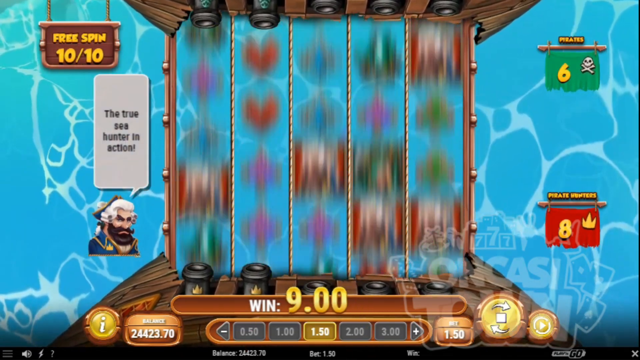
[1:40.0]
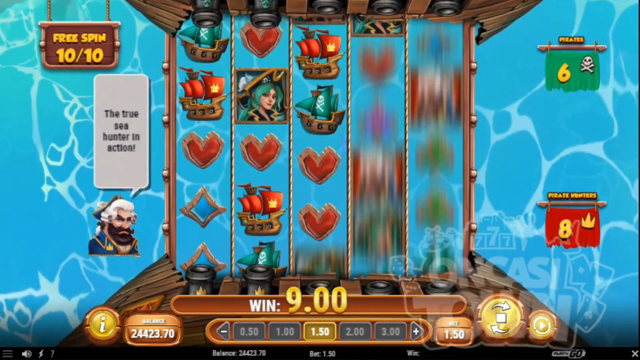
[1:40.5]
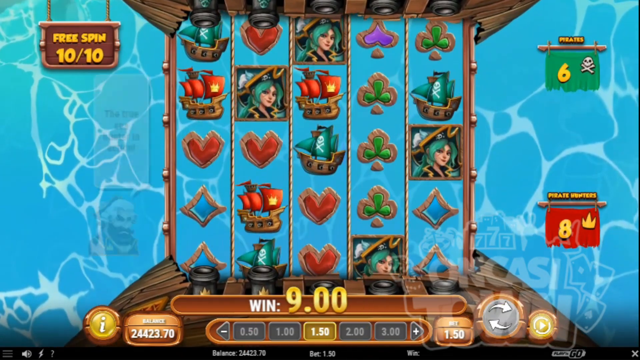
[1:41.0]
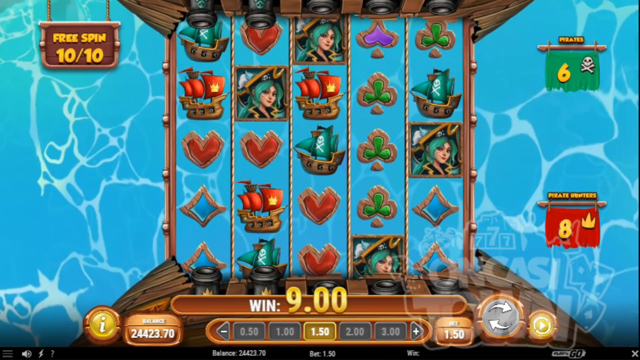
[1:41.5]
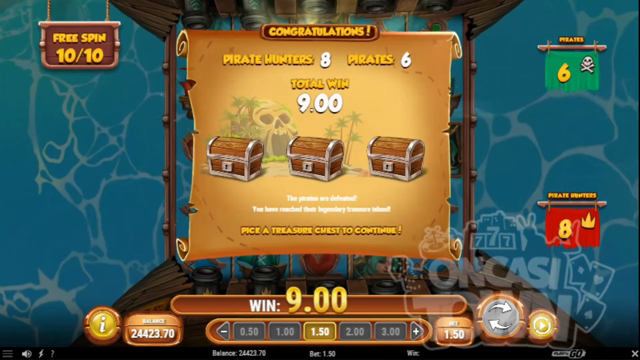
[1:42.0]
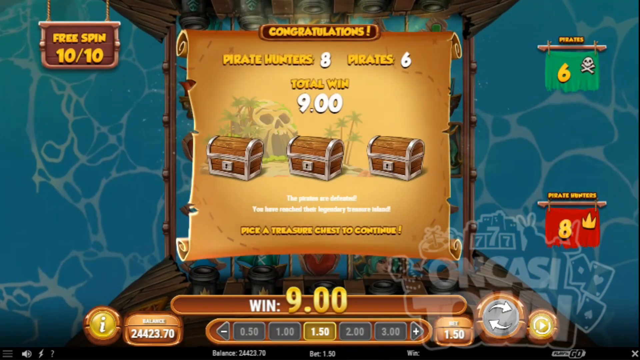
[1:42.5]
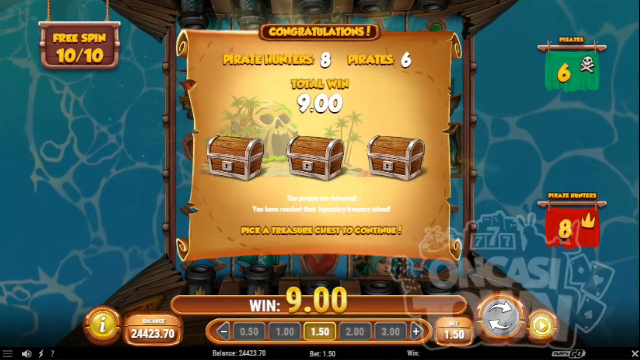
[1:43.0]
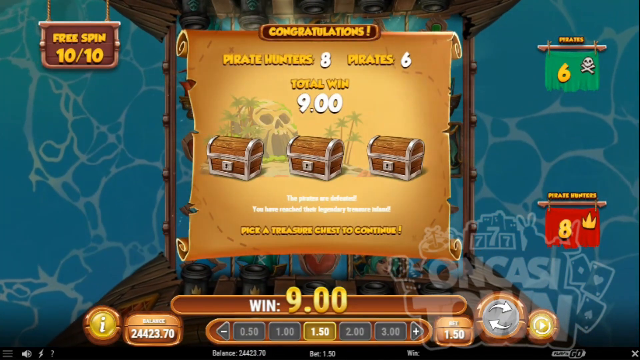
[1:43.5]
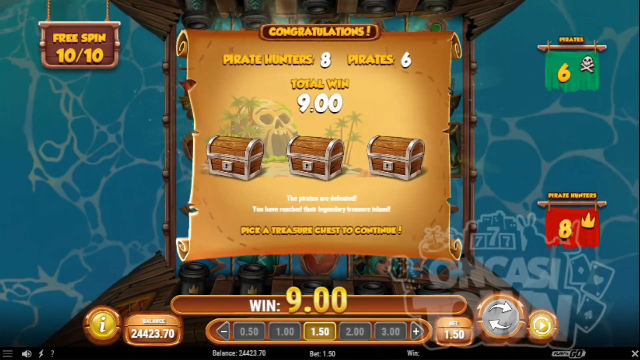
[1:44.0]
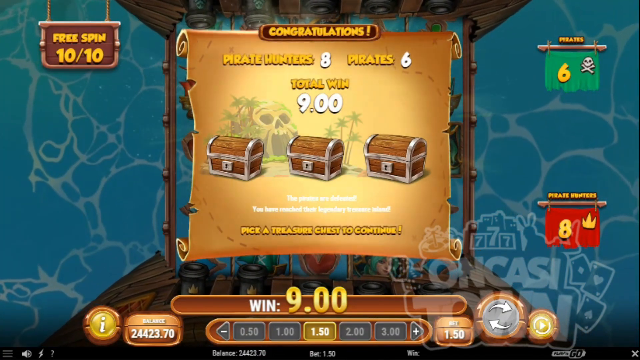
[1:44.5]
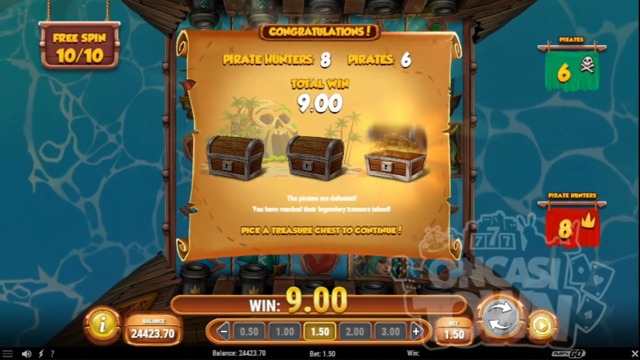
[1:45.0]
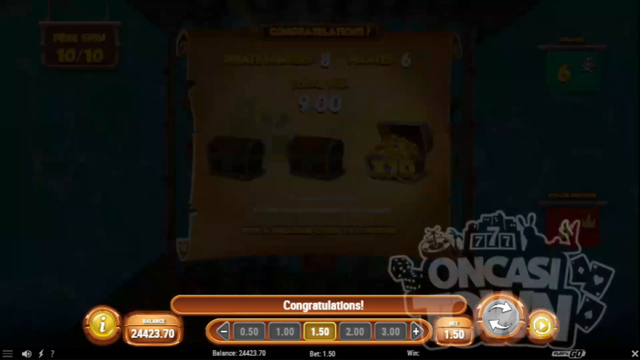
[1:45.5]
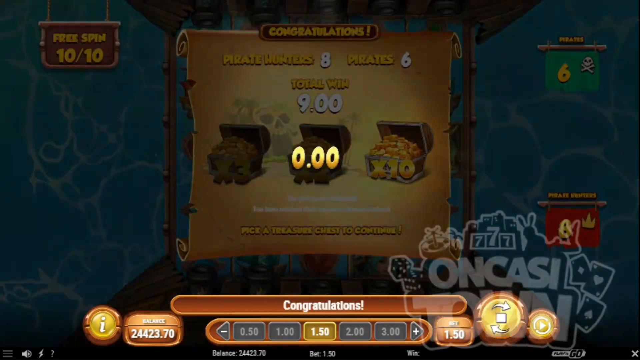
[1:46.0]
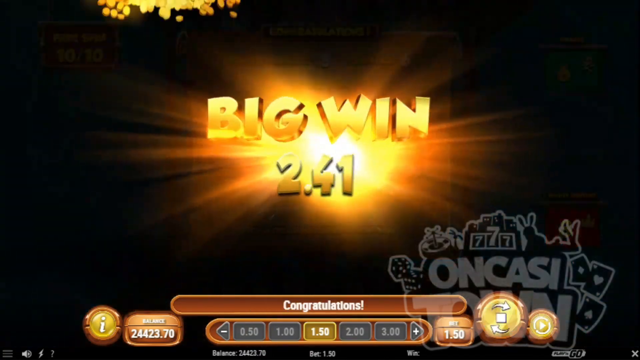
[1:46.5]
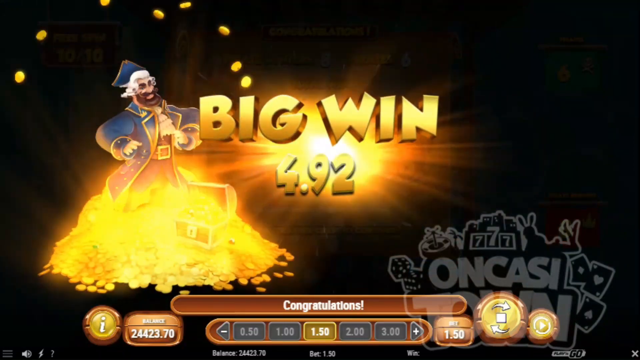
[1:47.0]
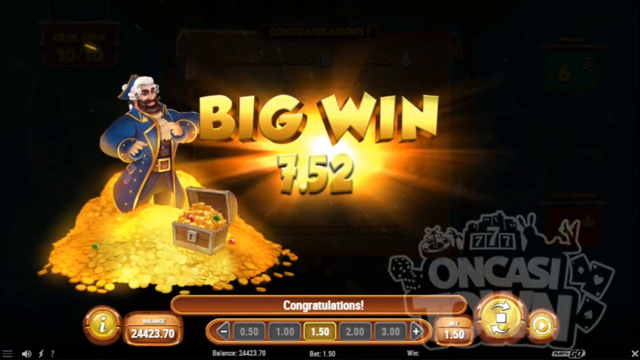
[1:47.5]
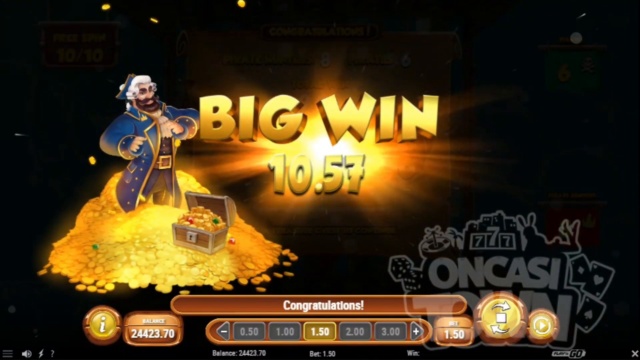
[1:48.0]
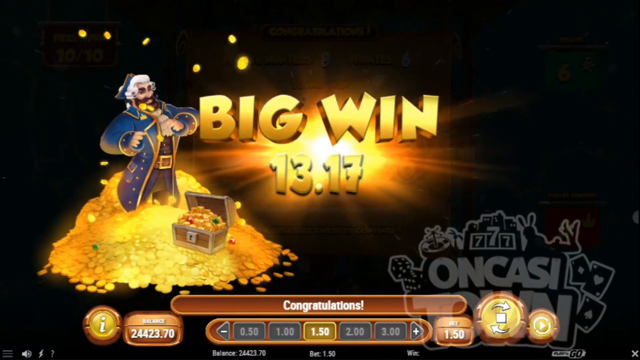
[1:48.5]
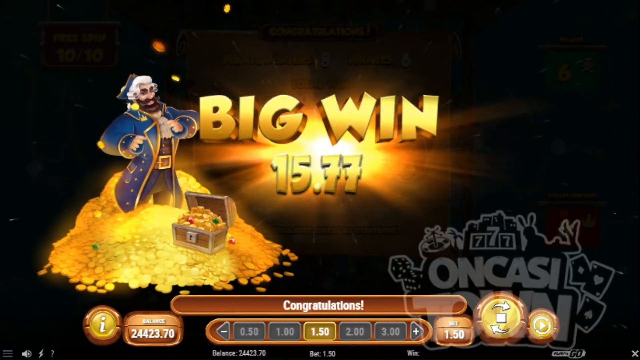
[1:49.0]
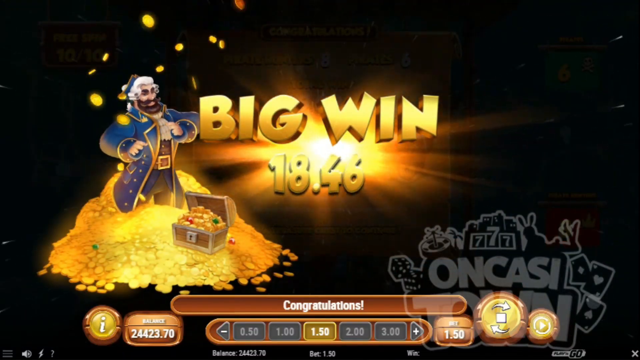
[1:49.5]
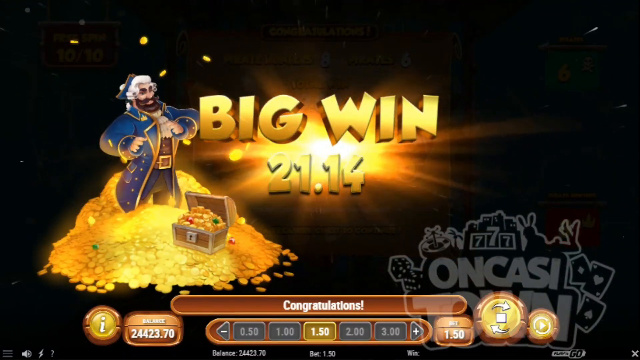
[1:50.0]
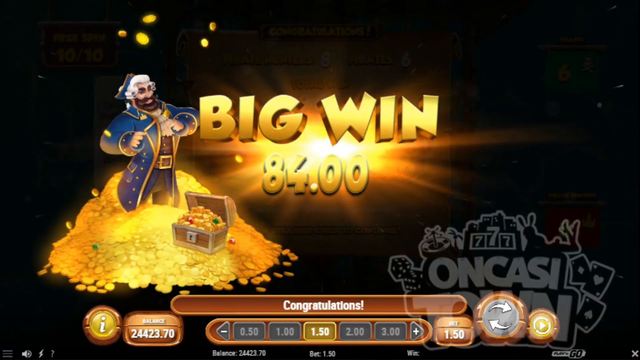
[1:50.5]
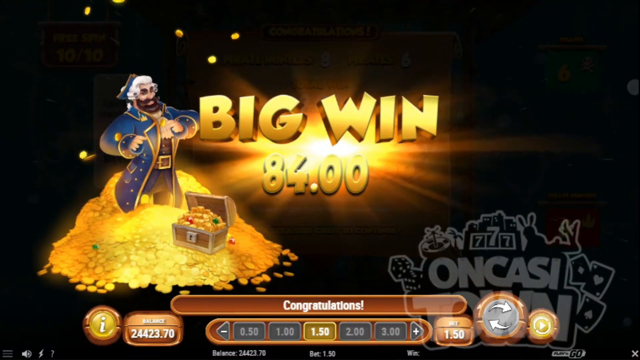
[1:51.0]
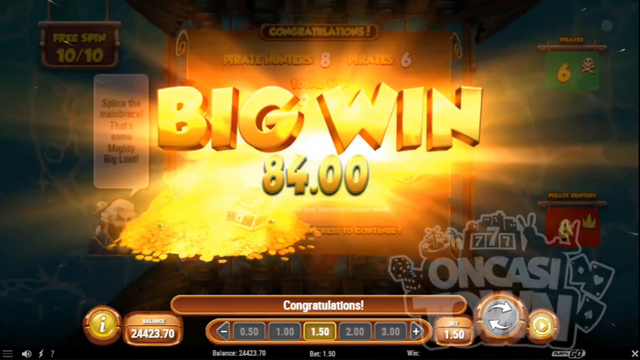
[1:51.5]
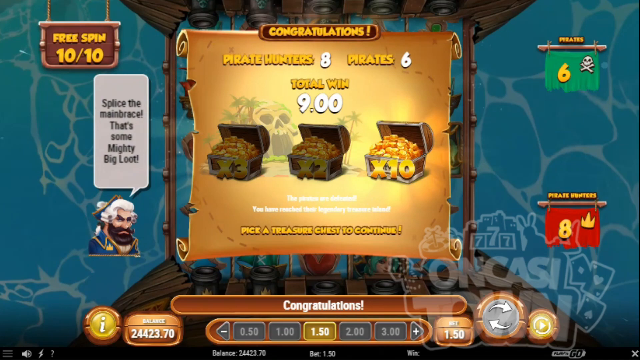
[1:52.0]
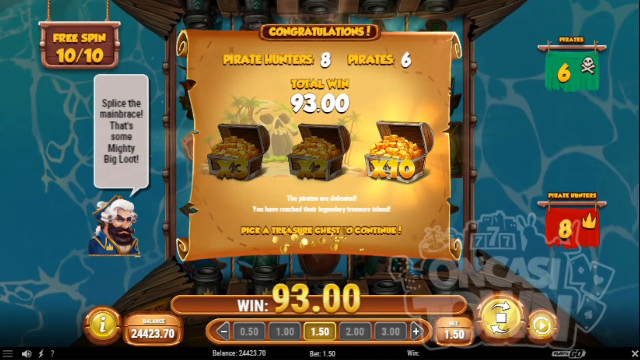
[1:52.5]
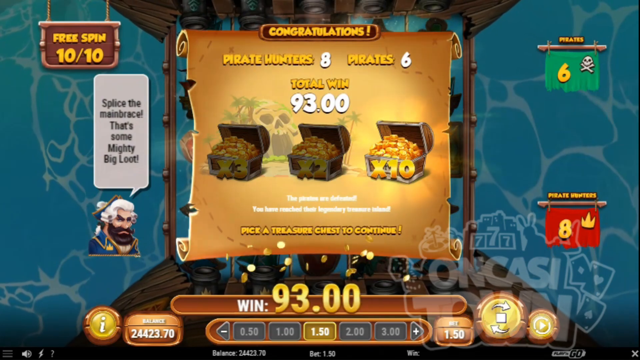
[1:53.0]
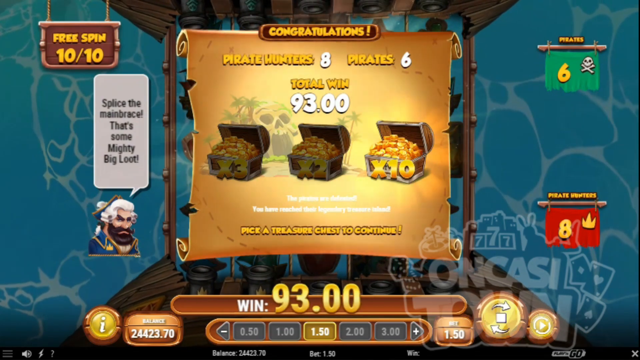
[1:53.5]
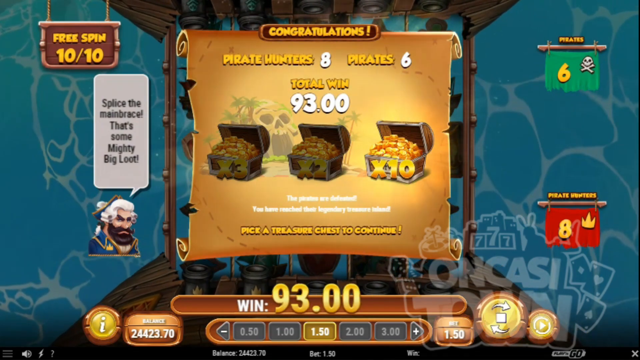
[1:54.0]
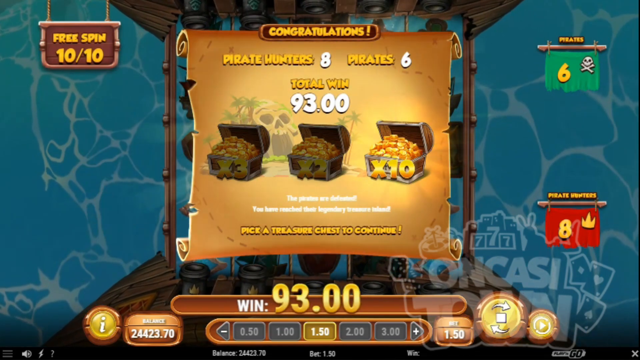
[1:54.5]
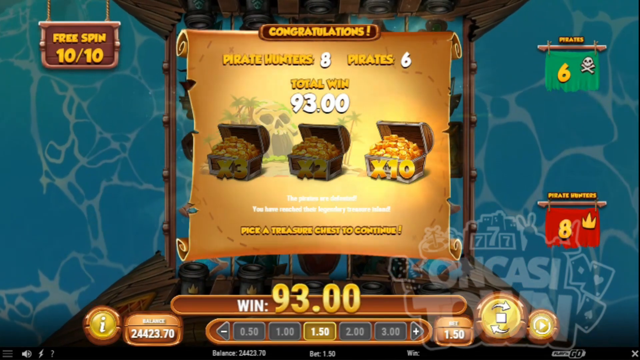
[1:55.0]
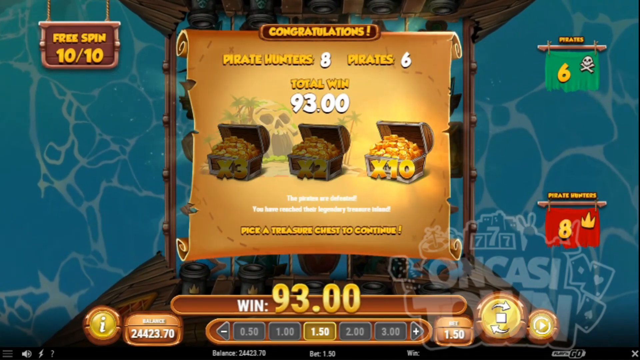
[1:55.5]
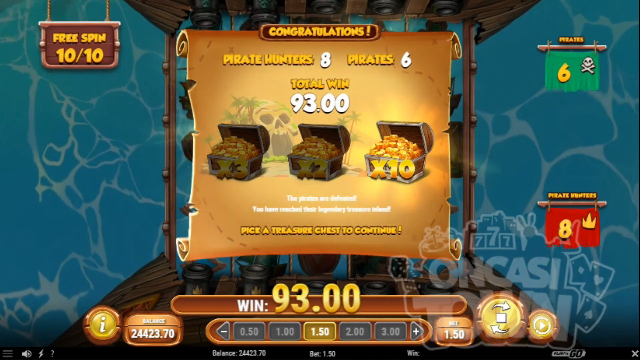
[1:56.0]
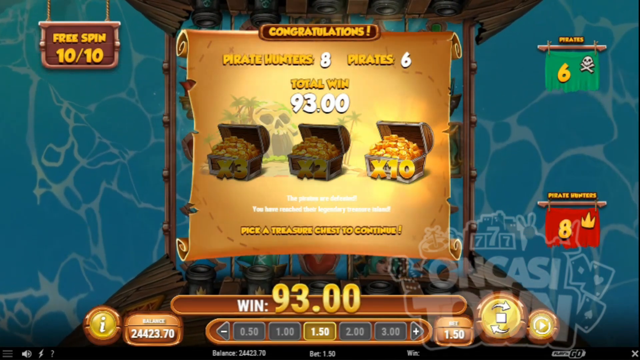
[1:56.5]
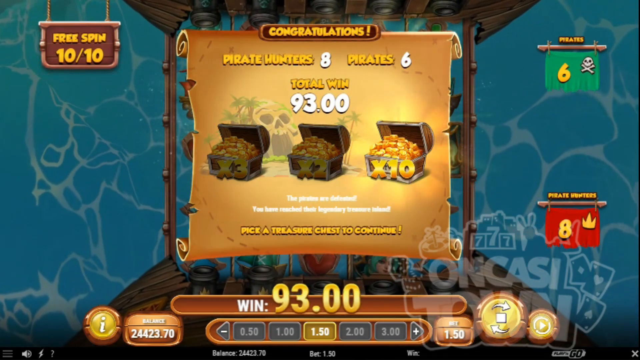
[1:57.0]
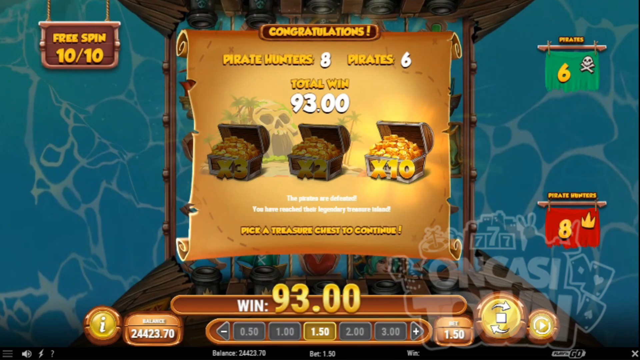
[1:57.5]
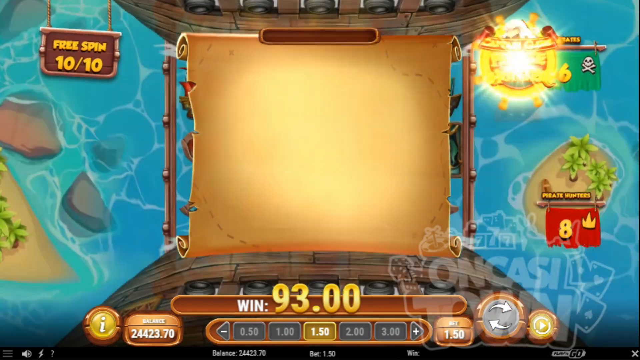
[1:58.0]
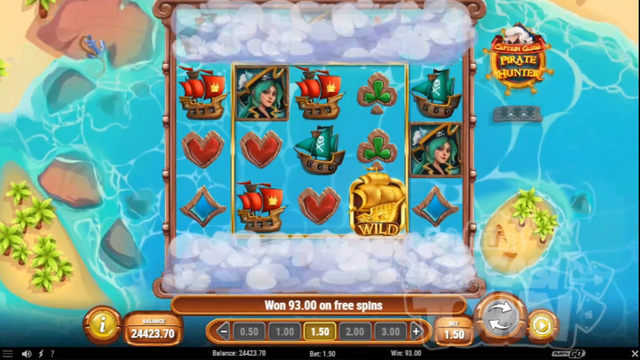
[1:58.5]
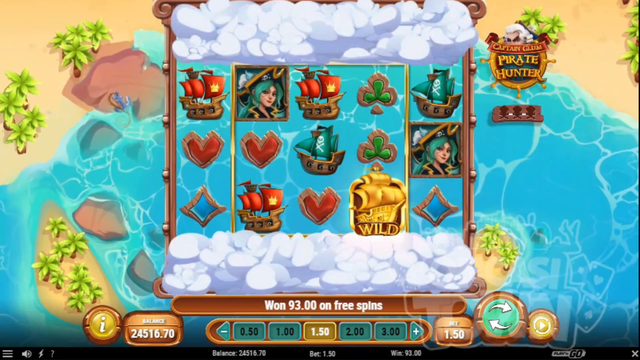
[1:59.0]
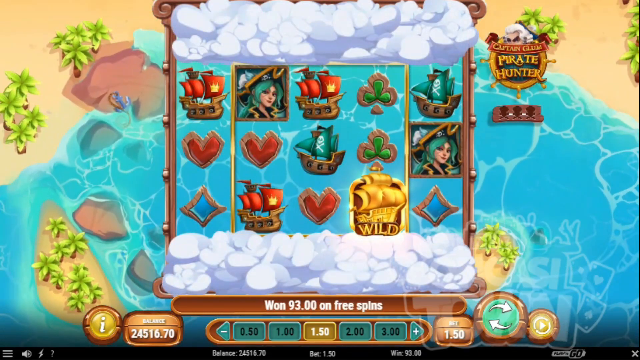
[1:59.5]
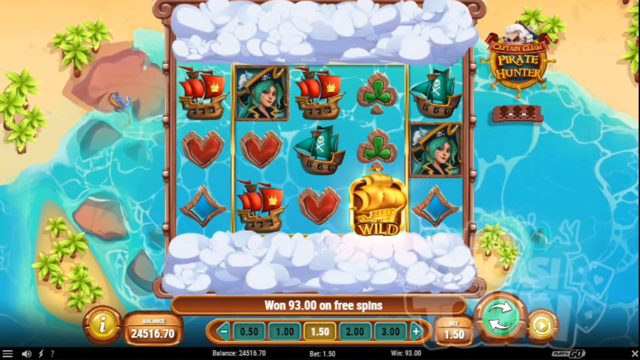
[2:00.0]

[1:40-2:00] A graphic in the top left says "free spin 10 out of 10", with the grumpy old pirate below it saying "the true sea hunter in action". The graphics on the right still say "6" on green in the top right and "8" on red in the bottom right. After a few seconds the scroll comes back up in the centre of the screen and the gameplay seems to stop. It says "congratulations pirate hunter is 8, pirate is 6, total win 9", with a picture of 3 treasure chests, and at the very bottom "pick a treasure chest to continue". A few glints of colour move across the treasure chests. The right-hand treasure chest is activated and falls open, showing a load of gold coins. The grumpy pirate comes up saying "big win 4.74", and the pirate counts up to 84.00. That graphic then disappears, returning to the scroll, which says "total win 93.00". A few sparkles come up at the bottom of the screen, and then gameplay resumes. In this part, fog covers the pirate ships at the top and bottom of the screen.